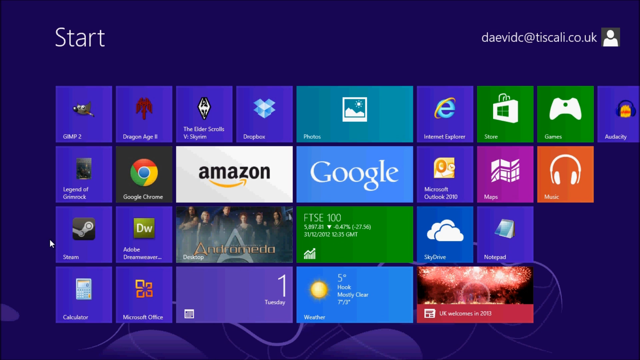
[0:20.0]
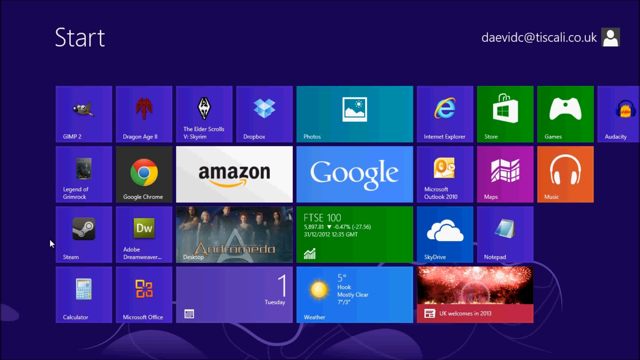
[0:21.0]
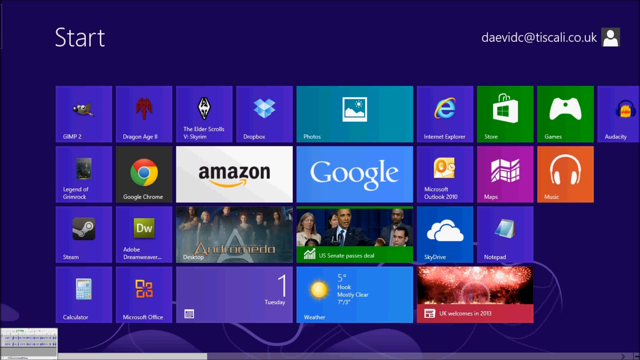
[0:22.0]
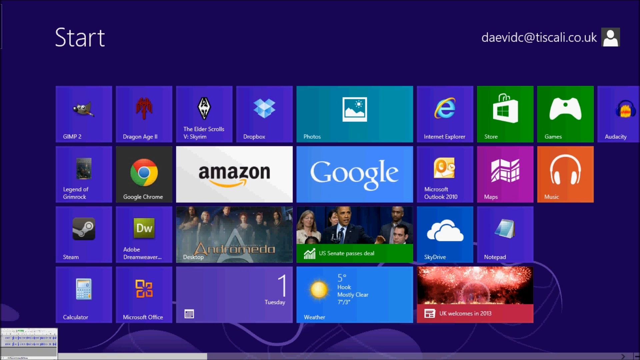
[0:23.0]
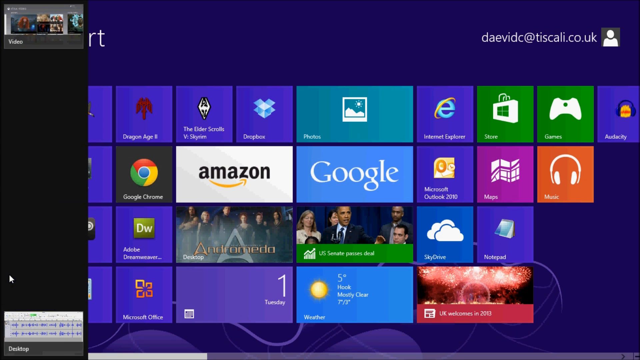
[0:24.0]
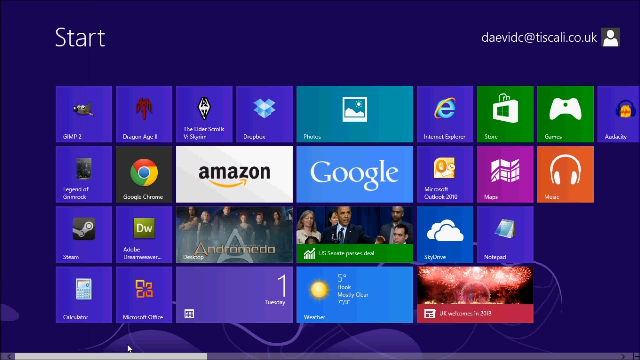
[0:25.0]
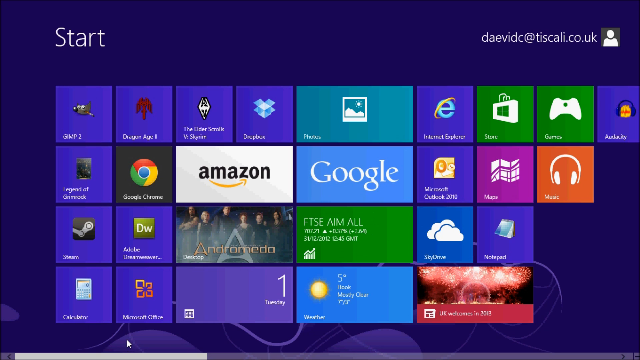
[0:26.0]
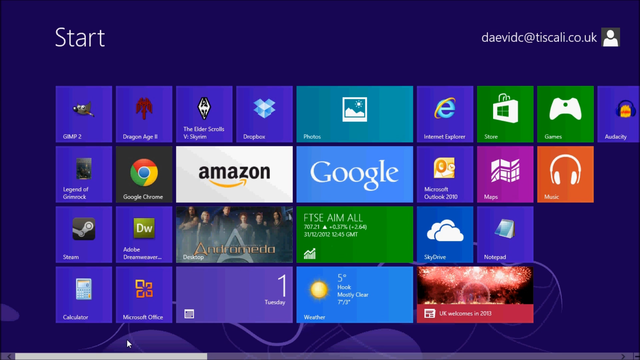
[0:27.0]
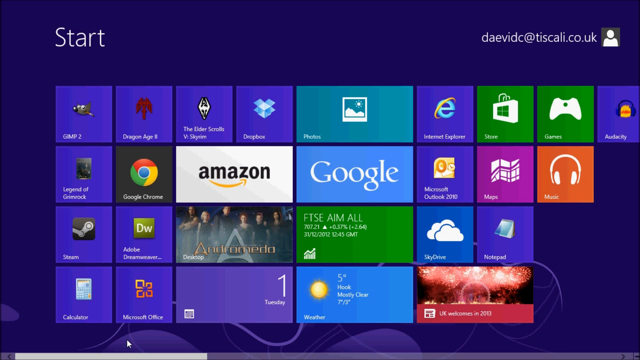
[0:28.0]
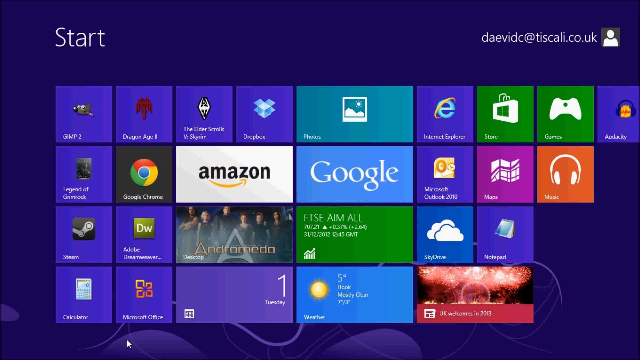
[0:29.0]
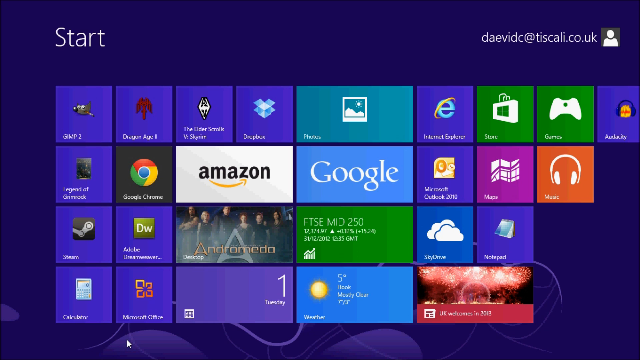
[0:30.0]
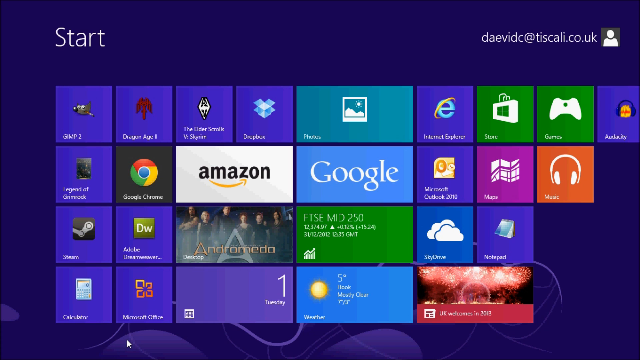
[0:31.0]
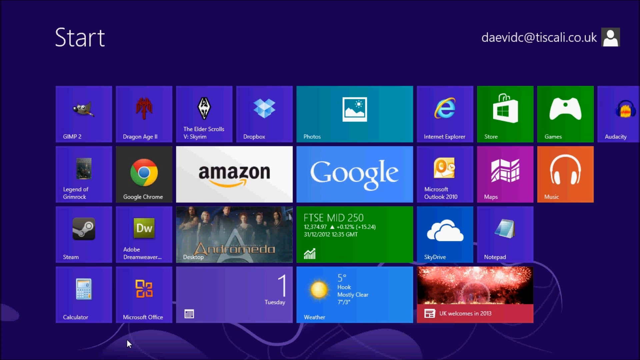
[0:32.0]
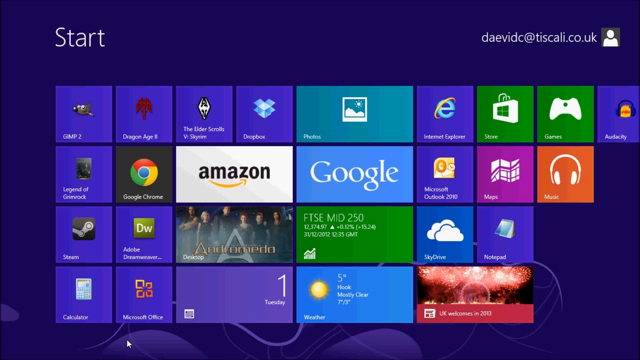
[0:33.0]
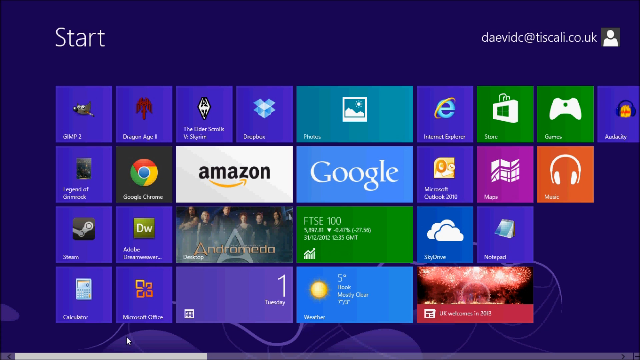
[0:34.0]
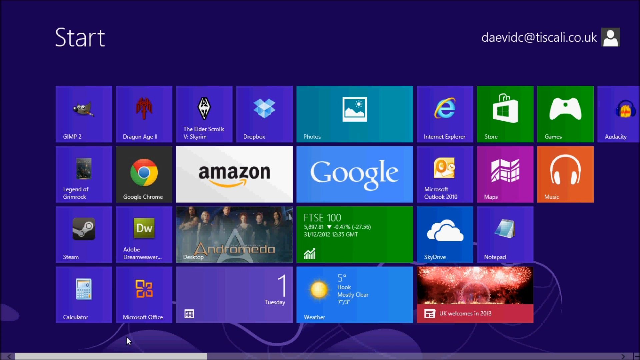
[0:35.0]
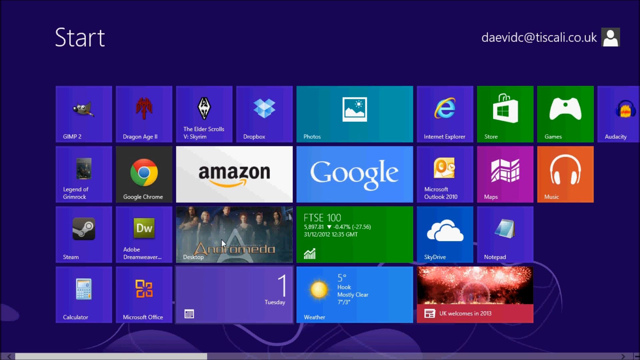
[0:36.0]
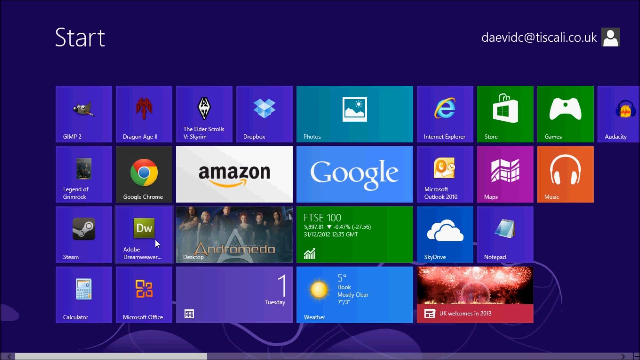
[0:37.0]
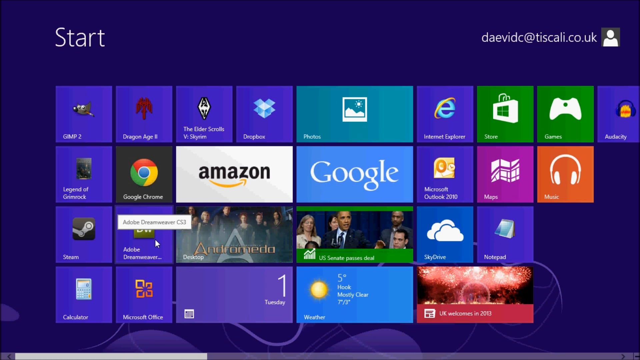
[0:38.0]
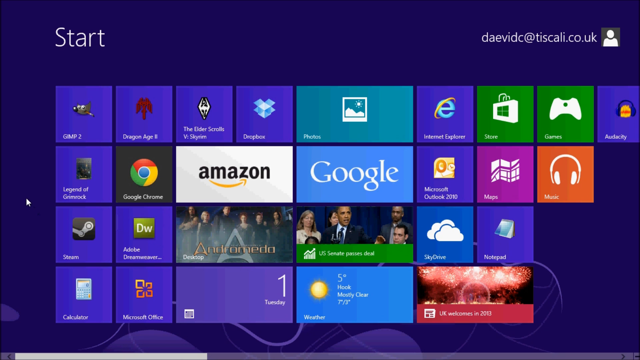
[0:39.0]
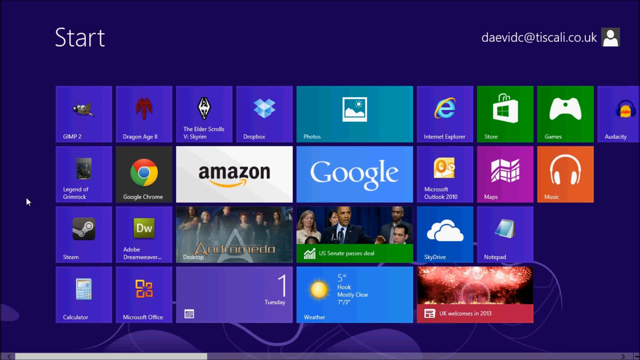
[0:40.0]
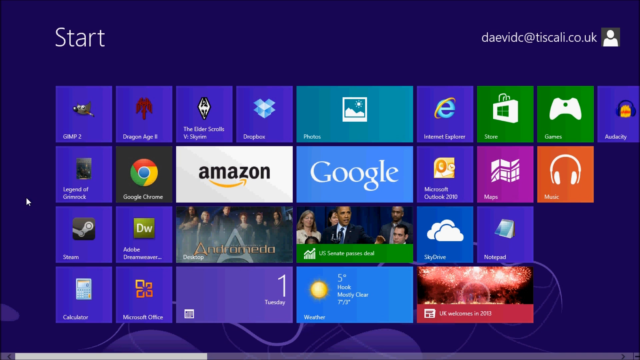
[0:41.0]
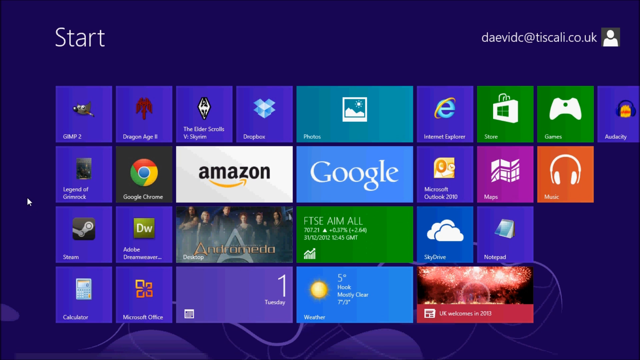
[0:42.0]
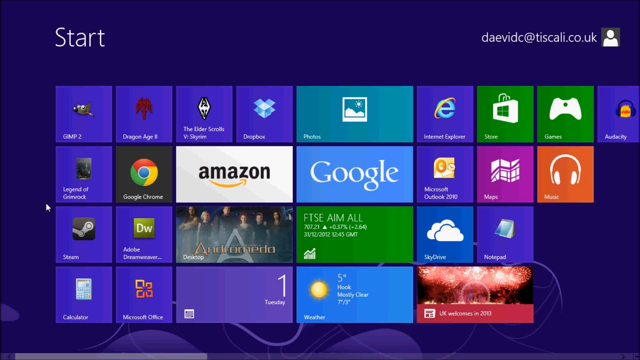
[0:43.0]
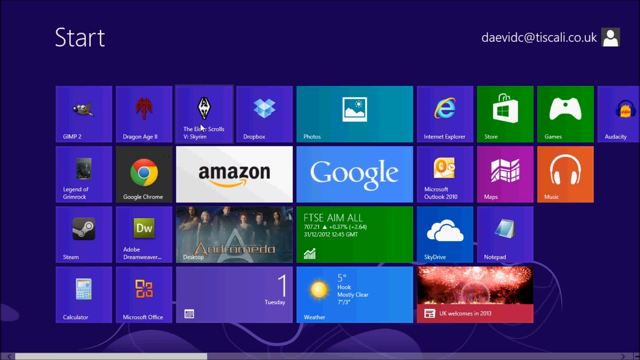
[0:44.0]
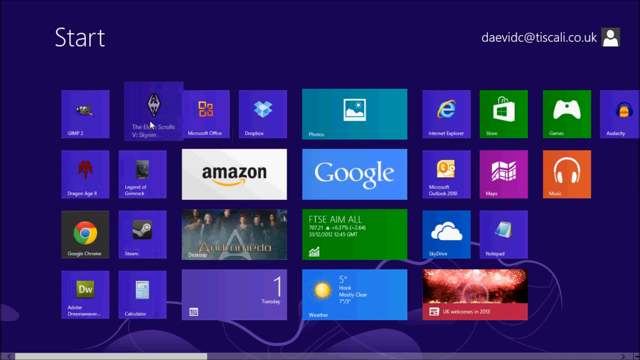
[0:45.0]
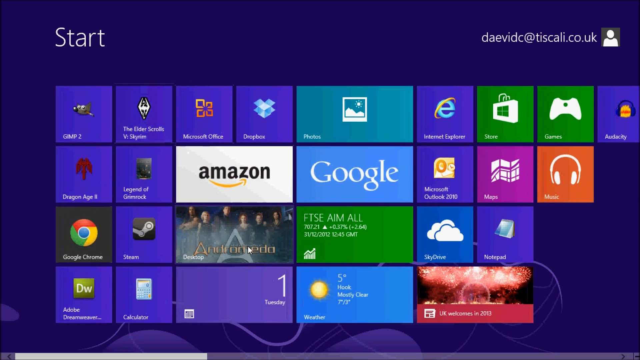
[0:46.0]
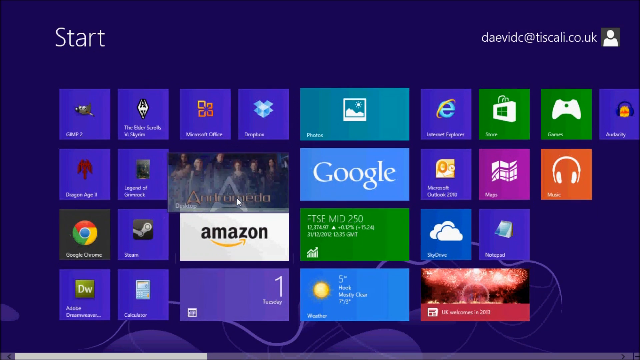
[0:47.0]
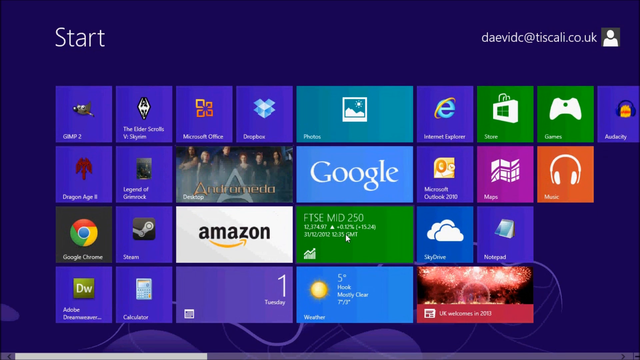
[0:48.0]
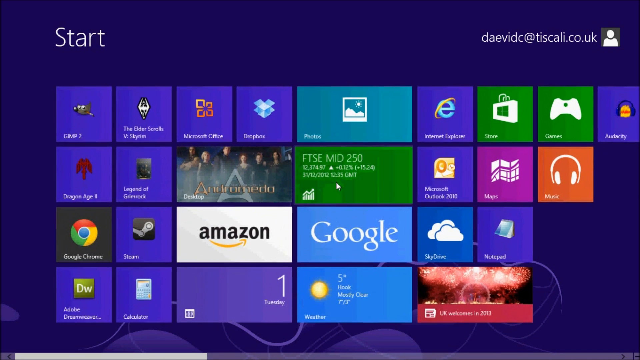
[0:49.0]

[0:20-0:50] The homepage of someone's gaming platform remains on screen; which platform is unclear. It somewhat resembles what an Xbox platform might look like, but possibly is not, since it includes apps unrelated to Xbox, such as Audacity in the right-hand corner, whose icon shows headphones and something like radio waves. Down in the lower right-hand corner there is an app that seems to be some type of news or celebrations feed. The user seemingly arranges the apps in a particular order, apparently by preference, and seemingly moves the Elder Scrolls app over; it looks like they are about to launch the game, but they do not. Below is some information about the footsie, covering stock market information, and there is an app for a show called Andromeda.